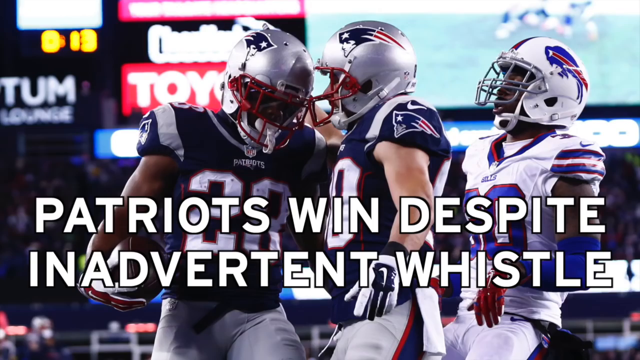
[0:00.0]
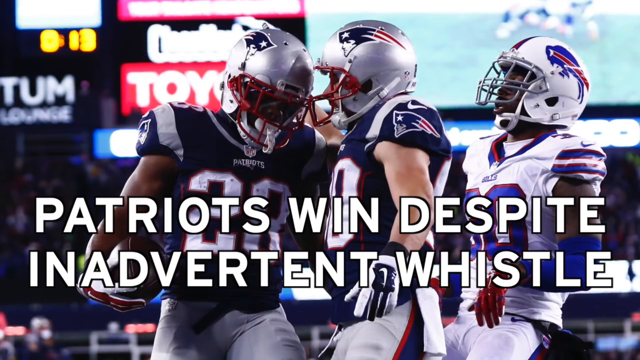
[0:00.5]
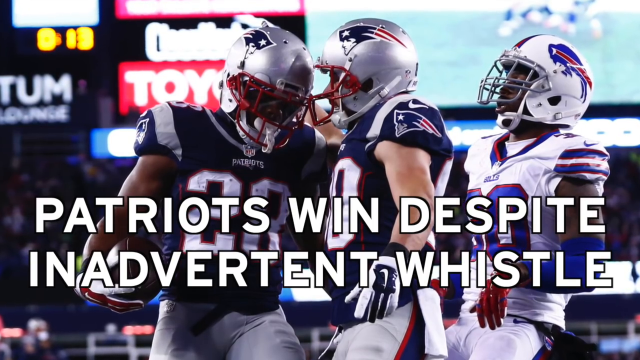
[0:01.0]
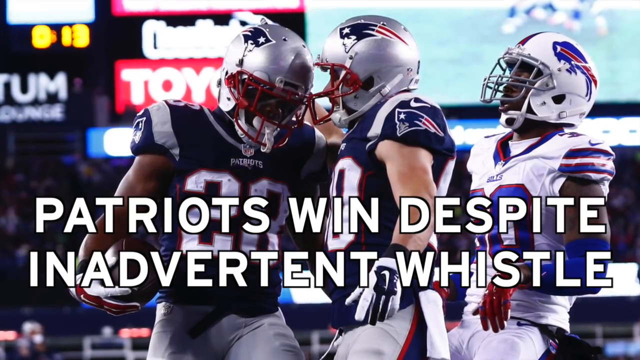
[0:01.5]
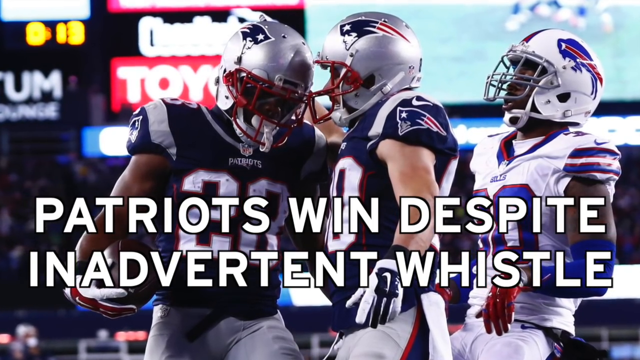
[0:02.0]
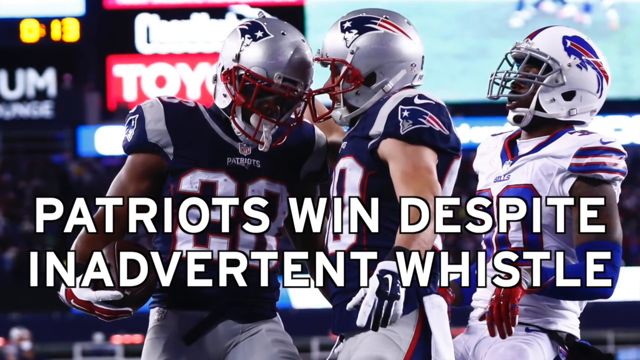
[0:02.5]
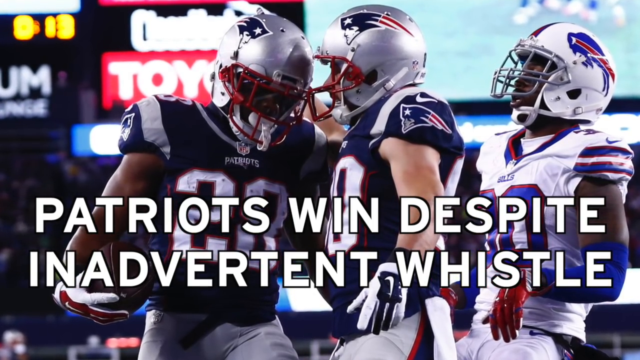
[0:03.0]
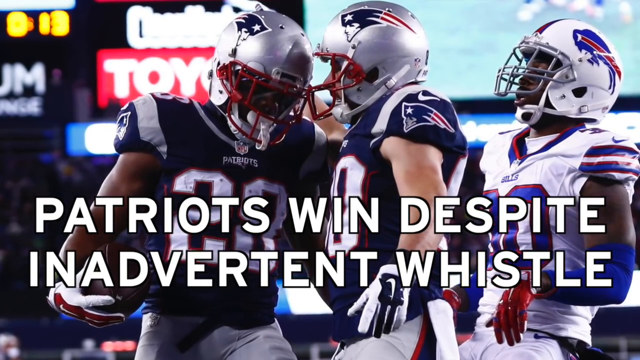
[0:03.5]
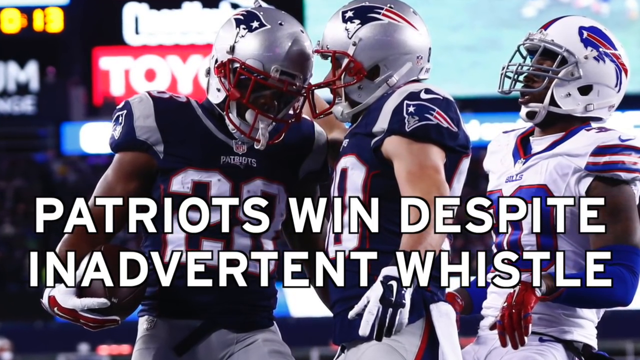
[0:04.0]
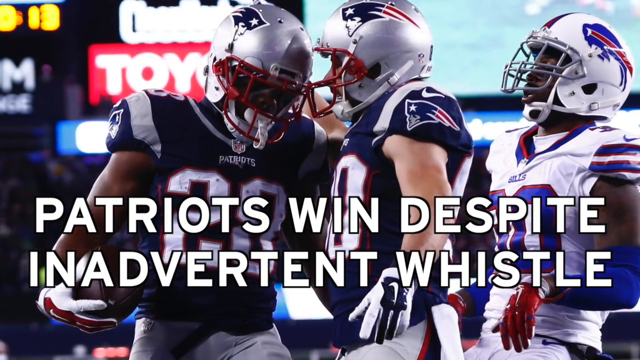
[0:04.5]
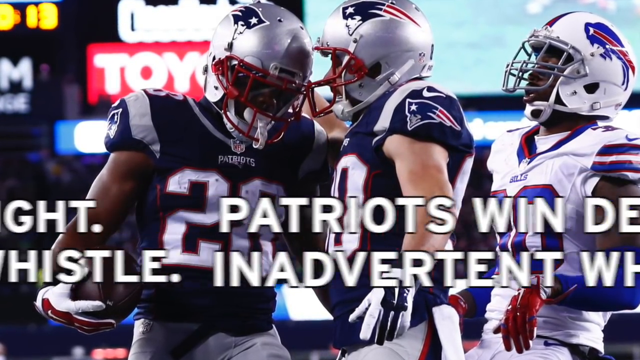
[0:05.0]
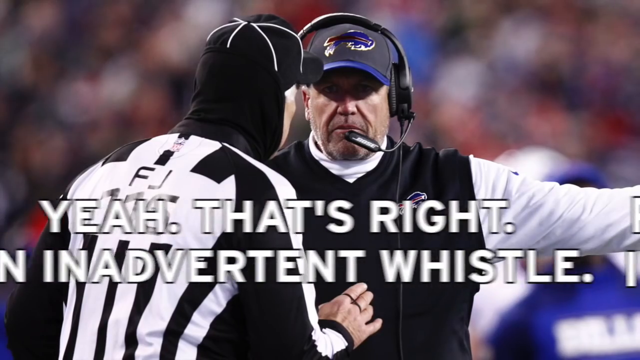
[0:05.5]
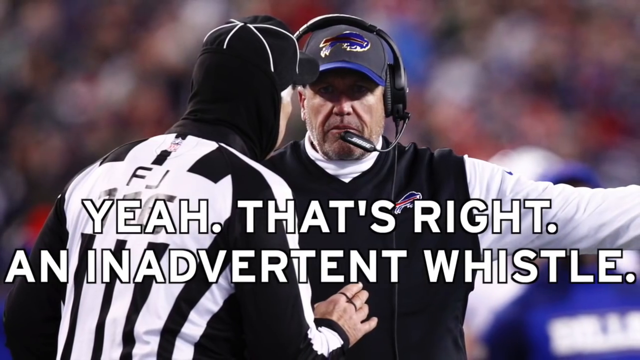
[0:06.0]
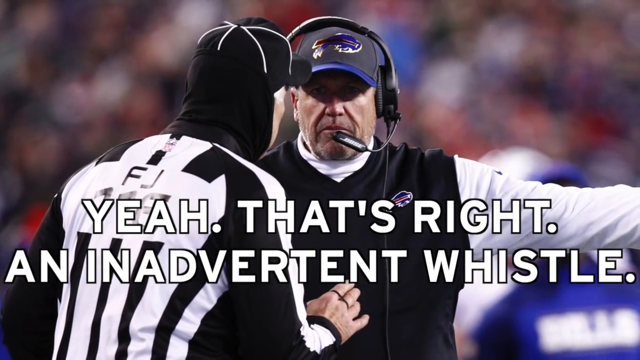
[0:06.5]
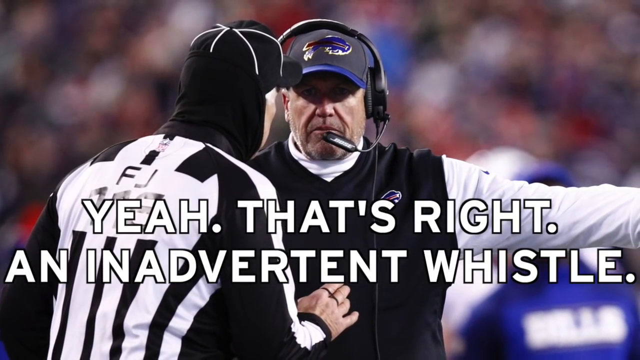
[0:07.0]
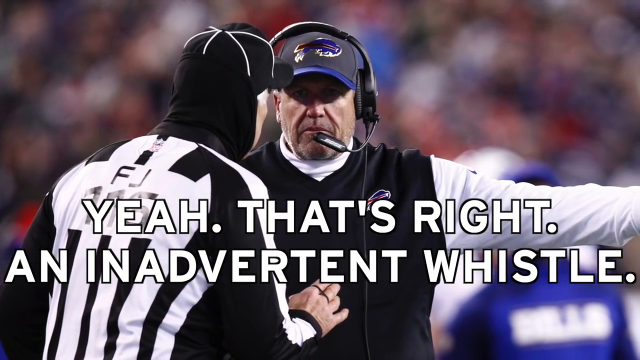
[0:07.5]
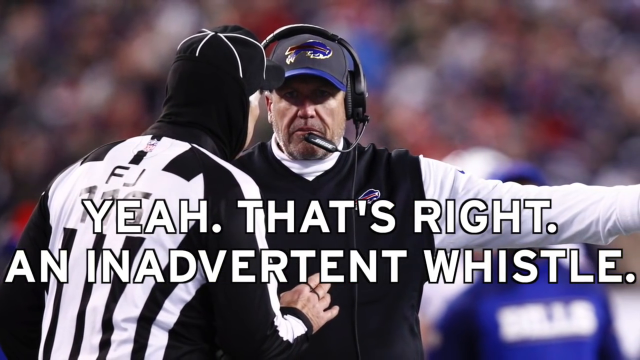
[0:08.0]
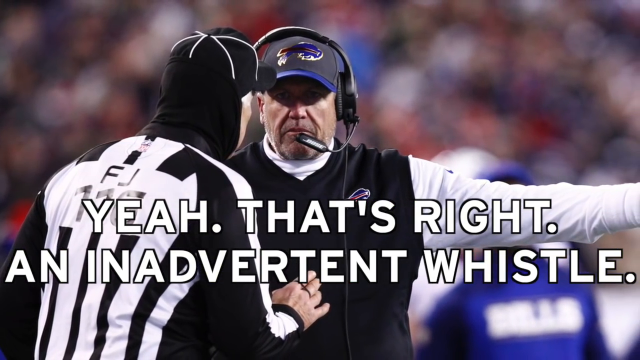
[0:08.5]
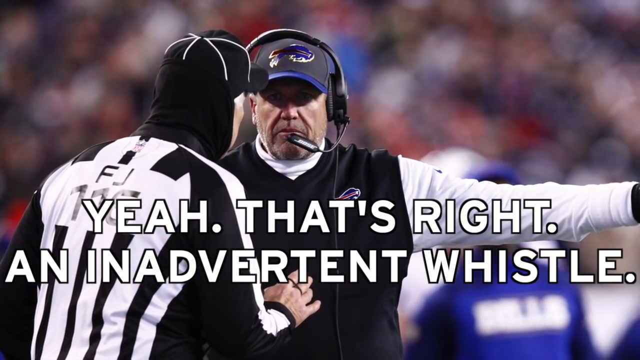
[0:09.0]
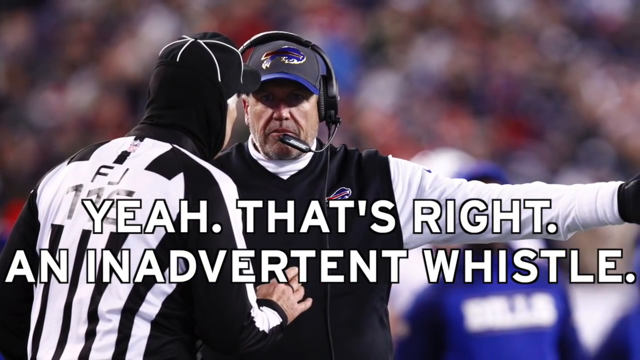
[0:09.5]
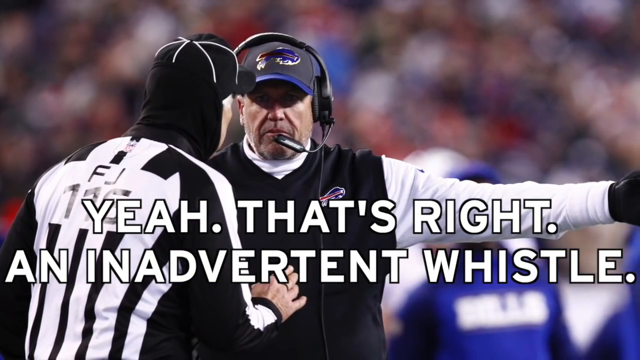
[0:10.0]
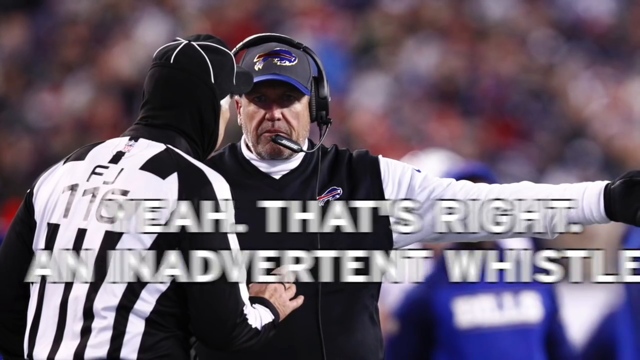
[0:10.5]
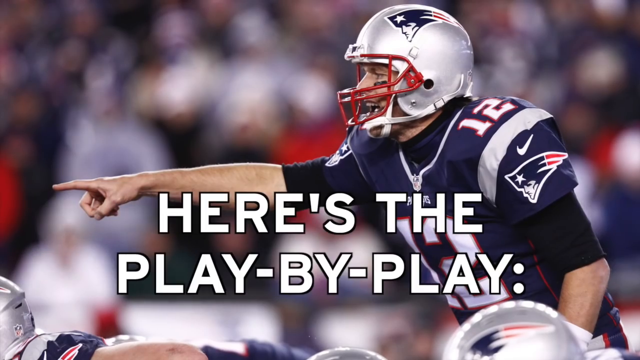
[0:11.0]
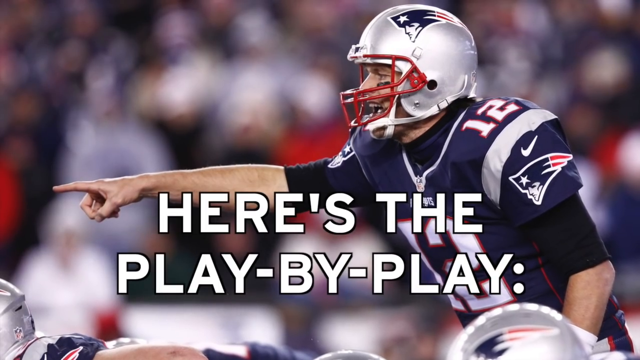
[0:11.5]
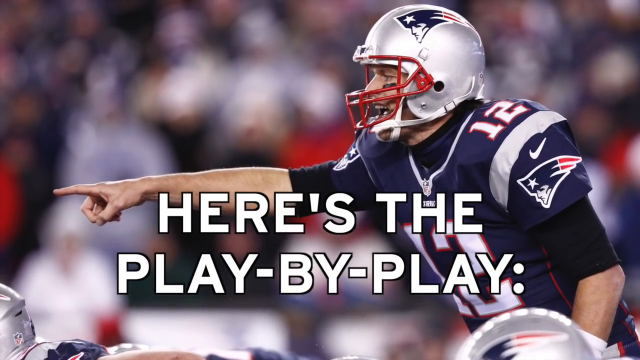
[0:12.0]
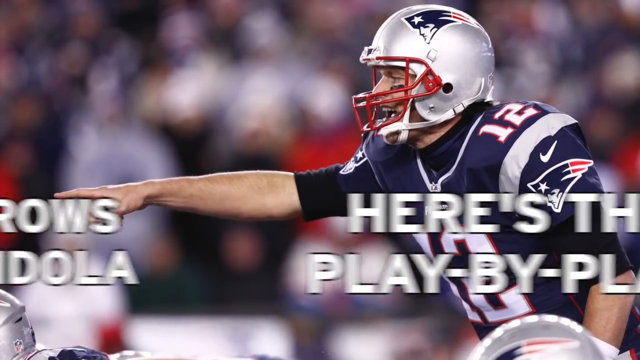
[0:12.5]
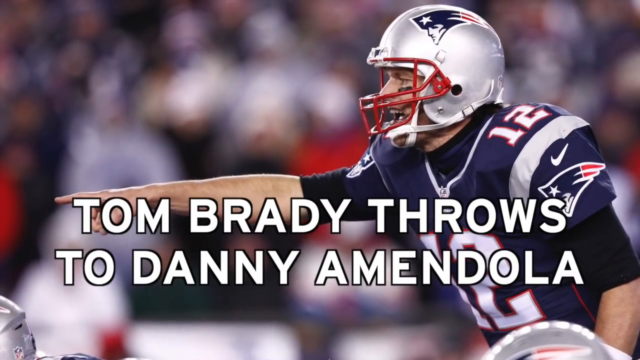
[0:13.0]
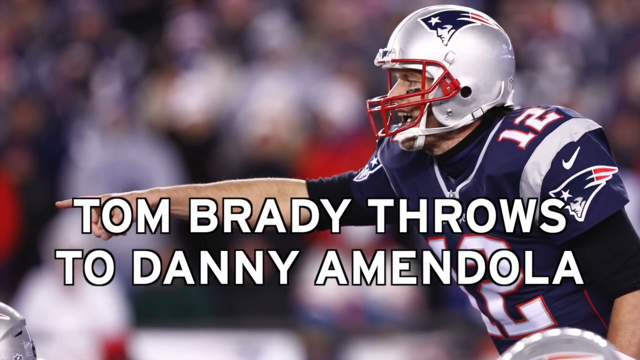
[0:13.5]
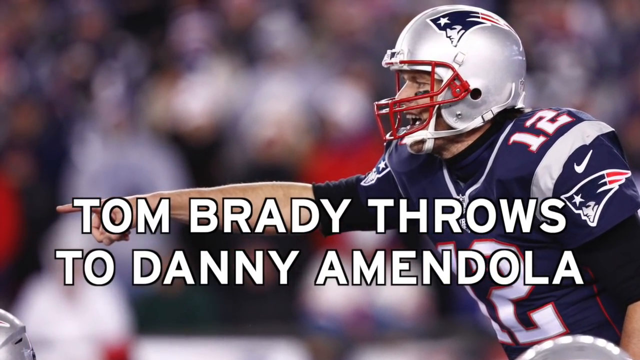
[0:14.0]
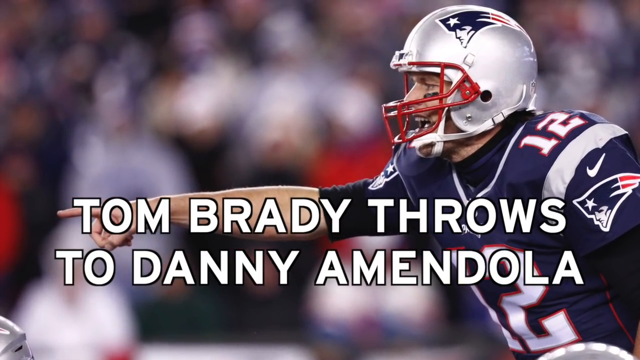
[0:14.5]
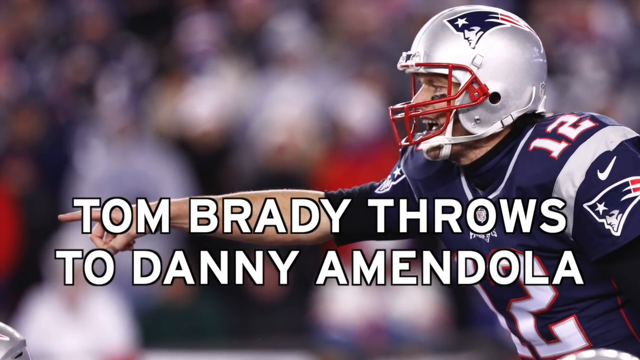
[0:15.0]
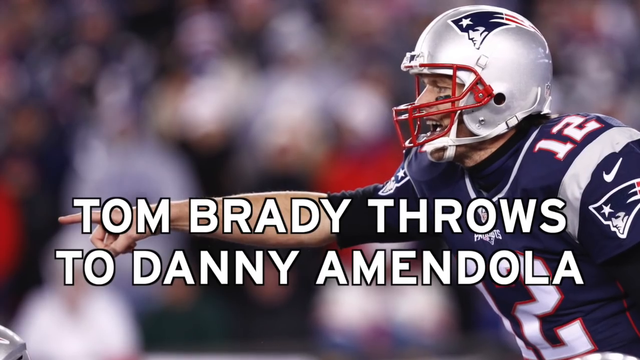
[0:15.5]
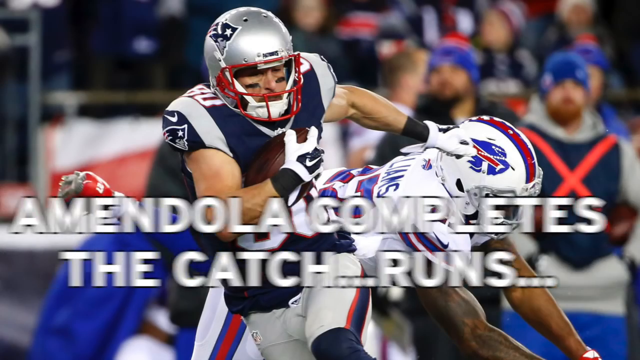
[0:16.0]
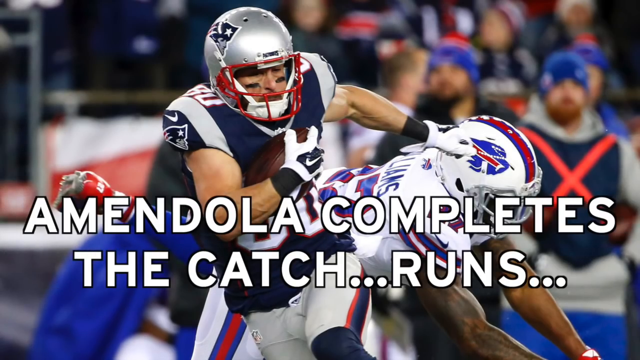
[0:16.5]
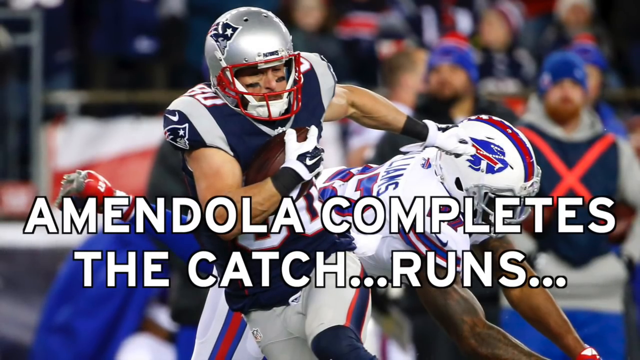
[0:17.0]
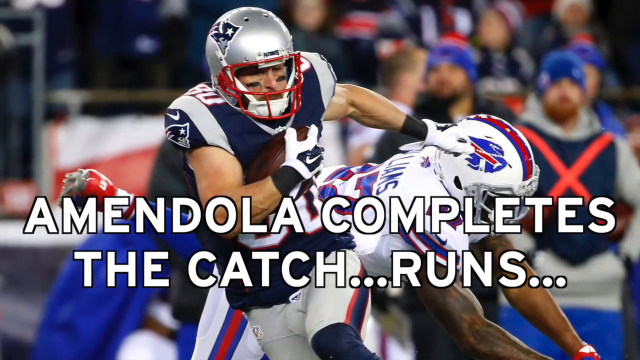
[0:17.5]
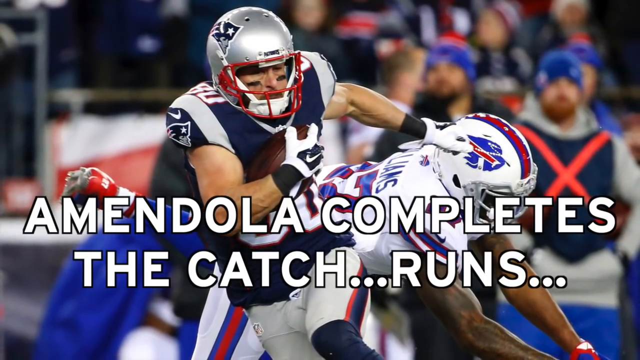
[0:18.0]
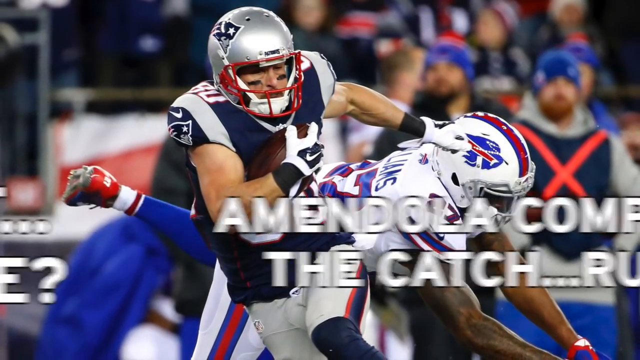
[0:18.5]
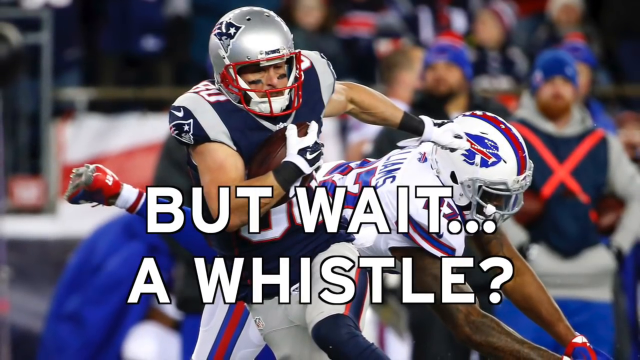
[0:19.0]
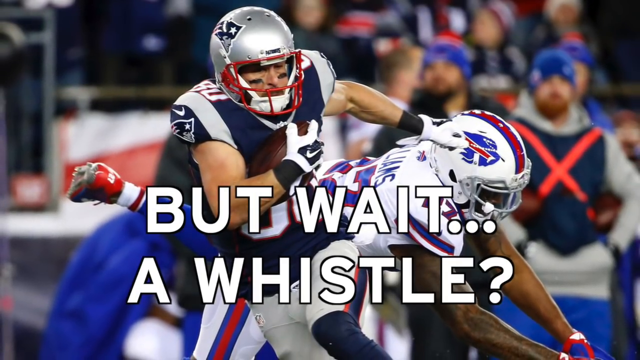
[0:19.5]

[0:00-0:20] On-screen text reads something like "Patriots win despite inadvertent whistle." Many players wear uniforms, caps and the protective equipment they need, and a referee is talking with other people. A play-by-play in the text describes Tom Brady throwing to Danny Mandola, who catches the ball, "but wait, a whistle."